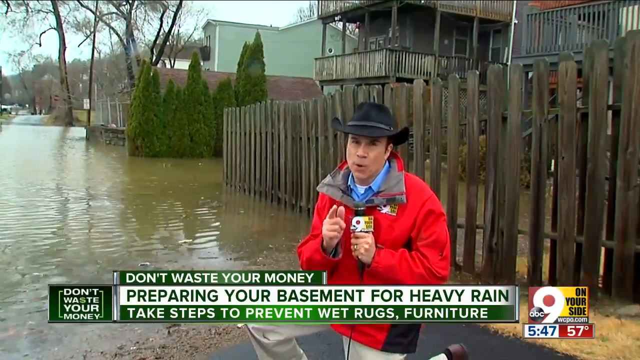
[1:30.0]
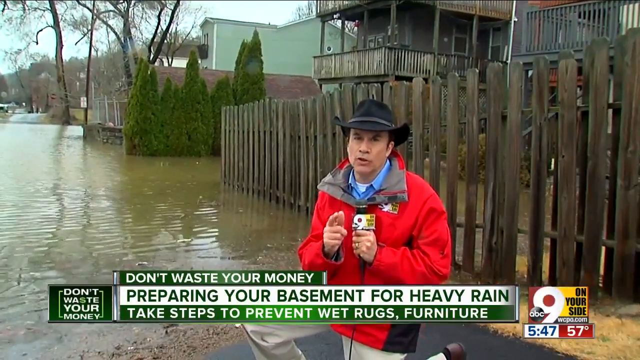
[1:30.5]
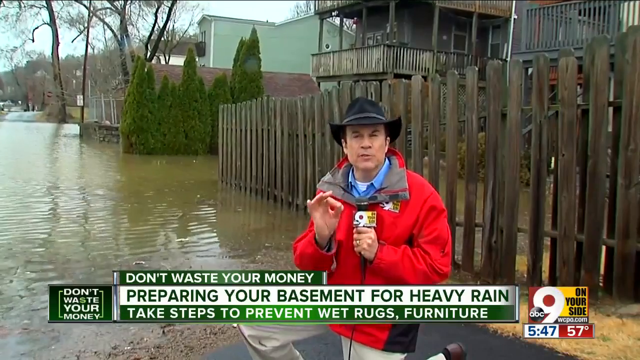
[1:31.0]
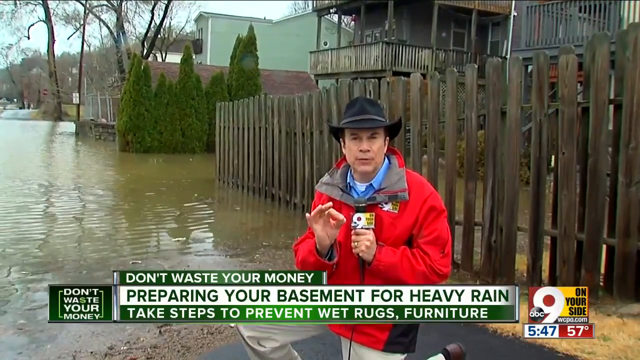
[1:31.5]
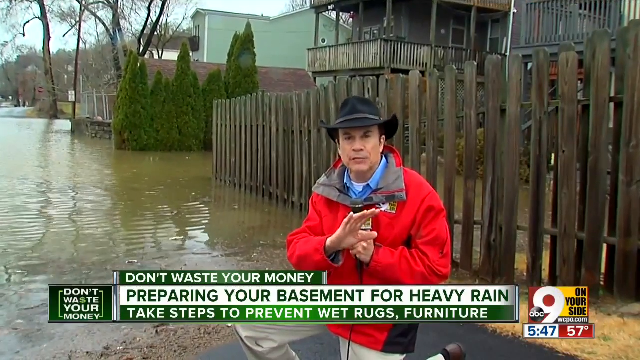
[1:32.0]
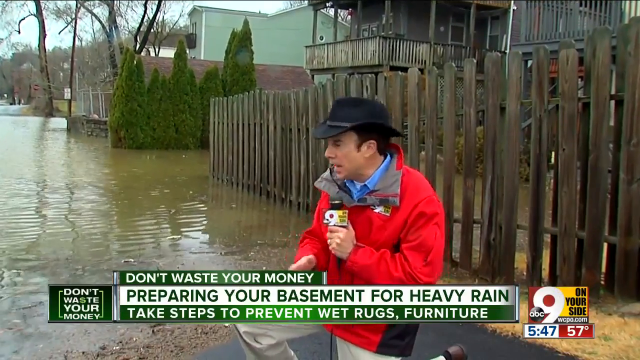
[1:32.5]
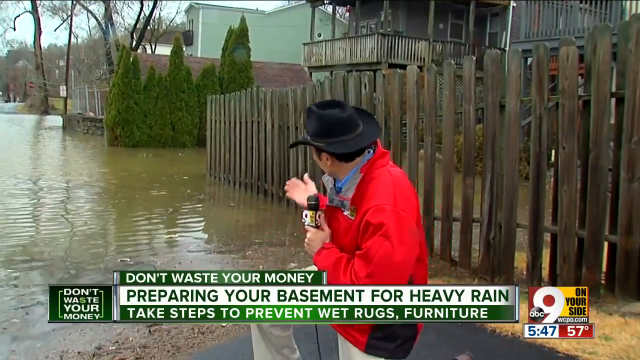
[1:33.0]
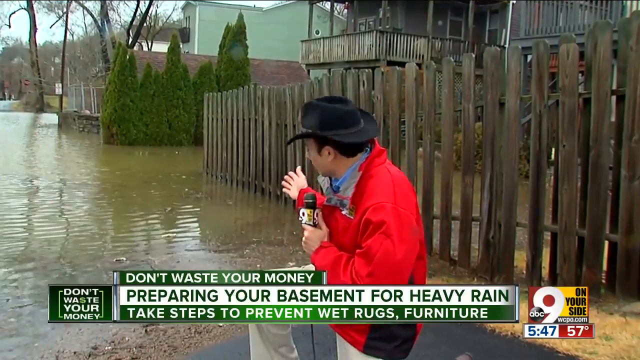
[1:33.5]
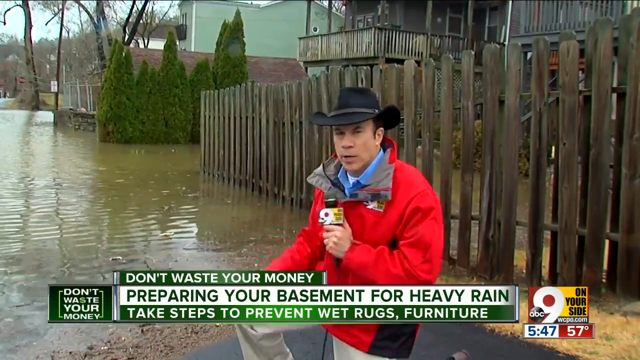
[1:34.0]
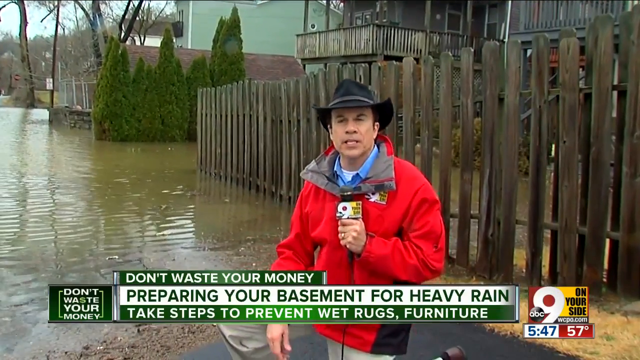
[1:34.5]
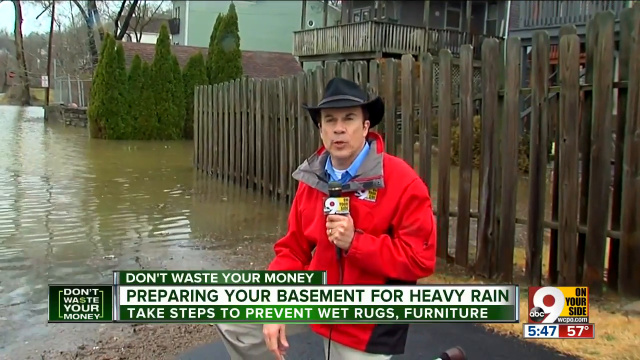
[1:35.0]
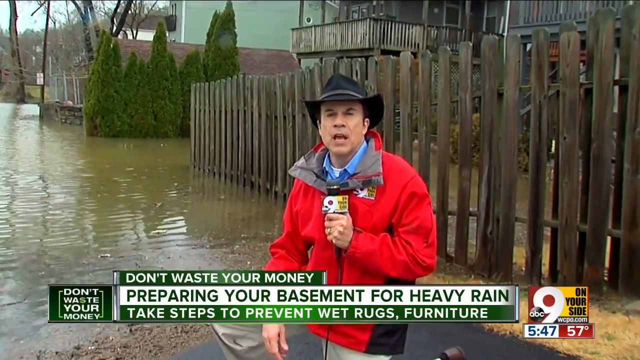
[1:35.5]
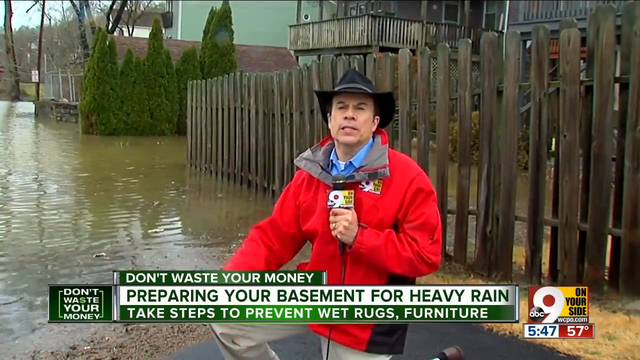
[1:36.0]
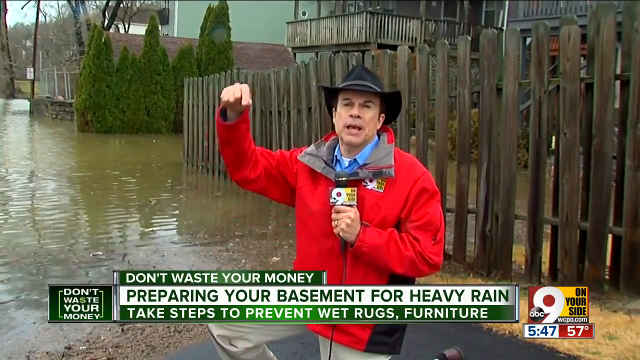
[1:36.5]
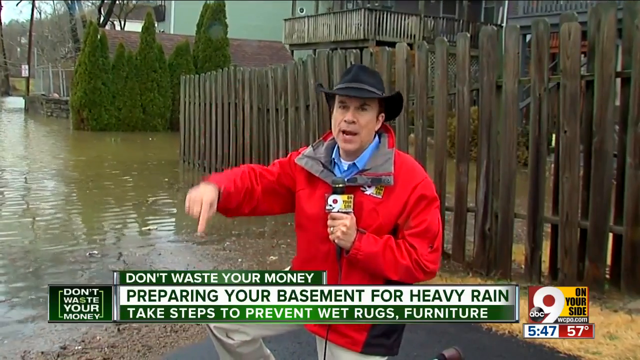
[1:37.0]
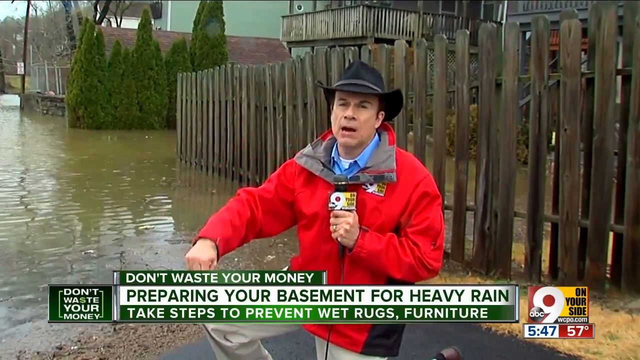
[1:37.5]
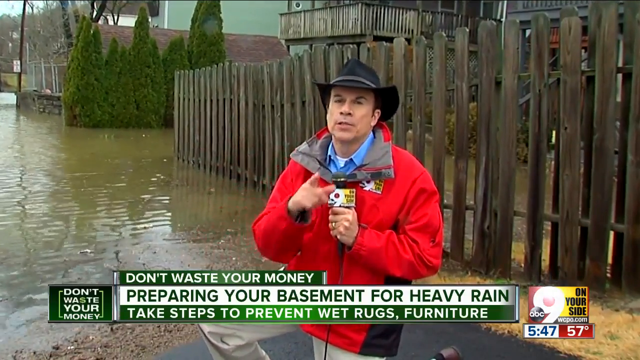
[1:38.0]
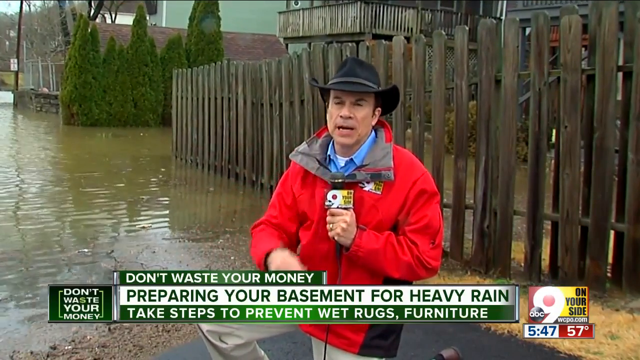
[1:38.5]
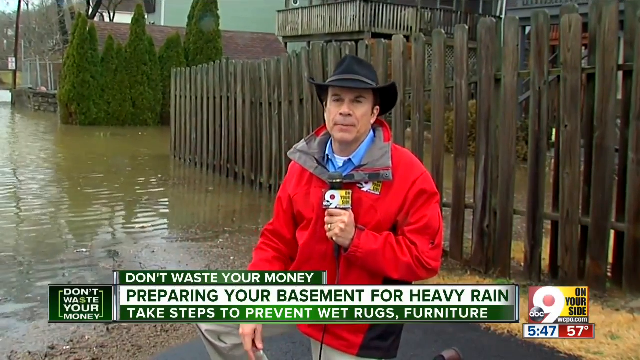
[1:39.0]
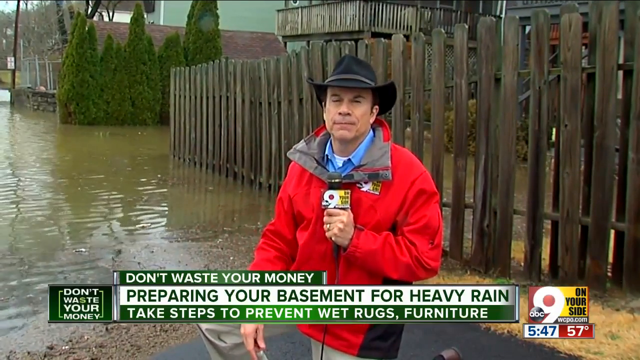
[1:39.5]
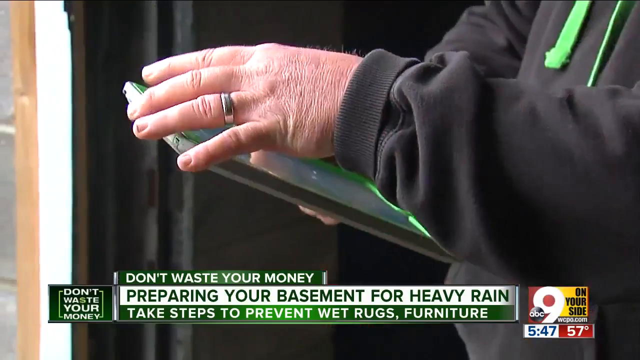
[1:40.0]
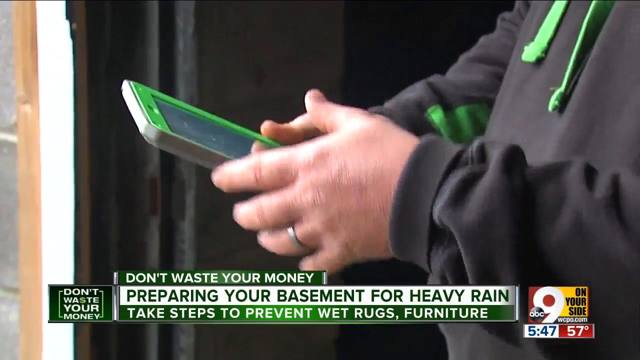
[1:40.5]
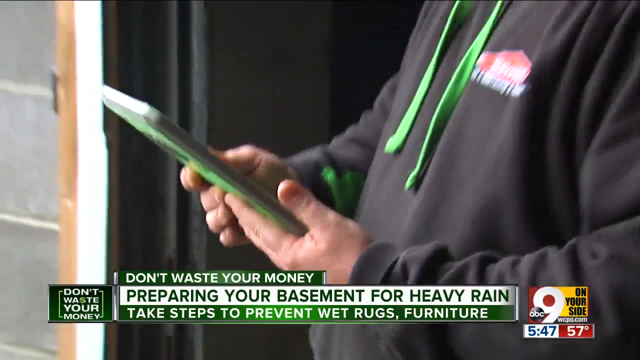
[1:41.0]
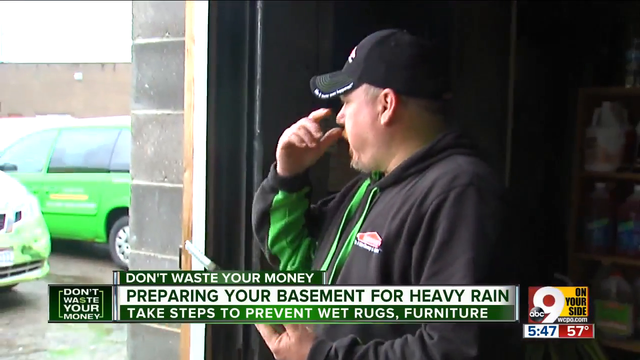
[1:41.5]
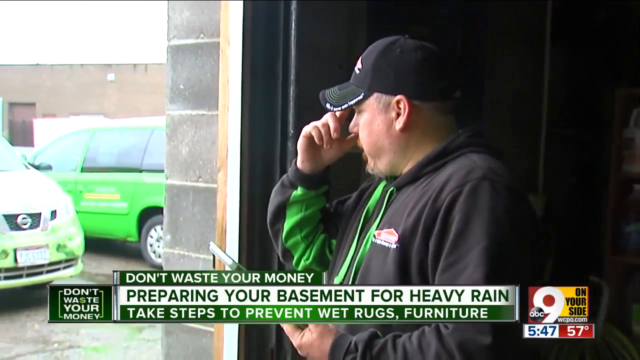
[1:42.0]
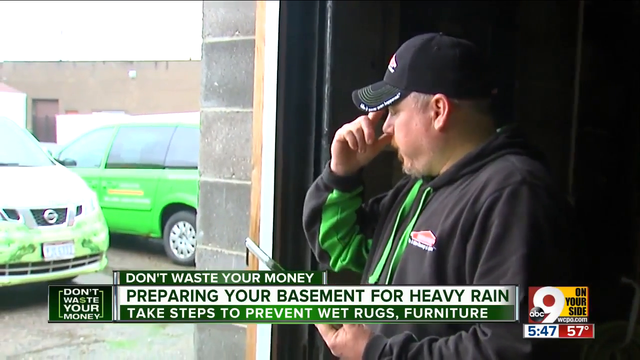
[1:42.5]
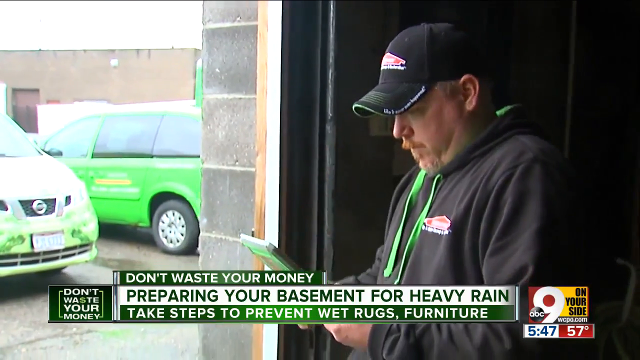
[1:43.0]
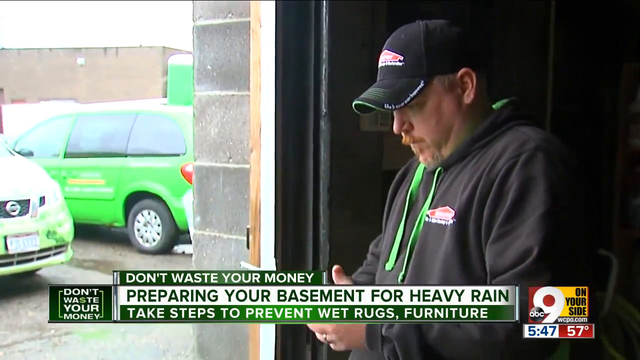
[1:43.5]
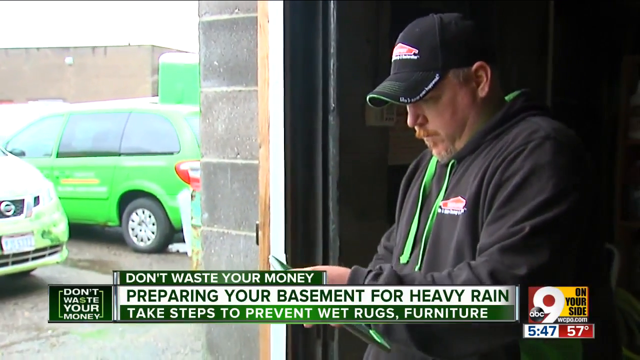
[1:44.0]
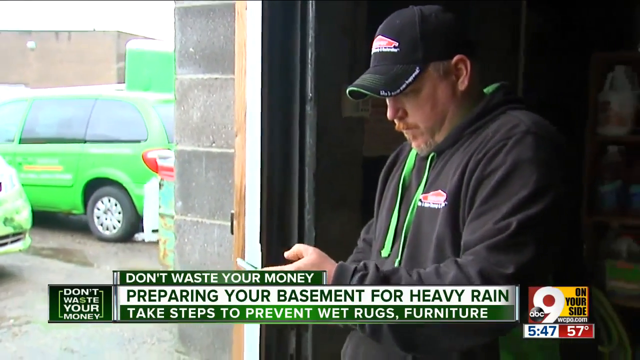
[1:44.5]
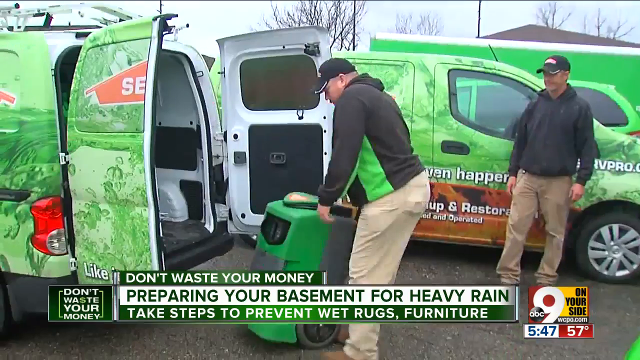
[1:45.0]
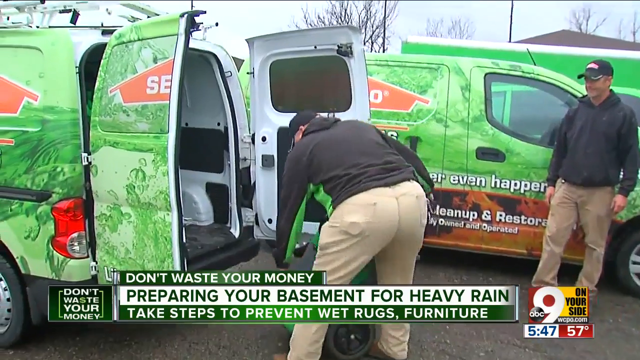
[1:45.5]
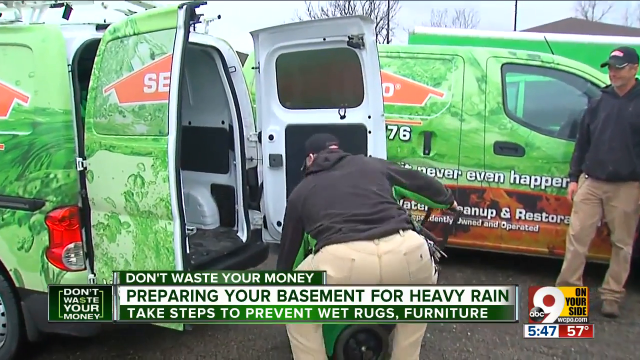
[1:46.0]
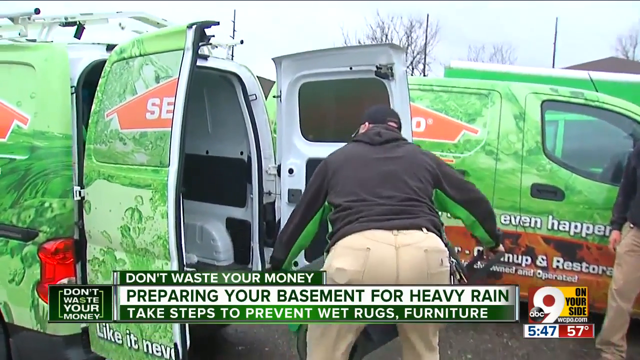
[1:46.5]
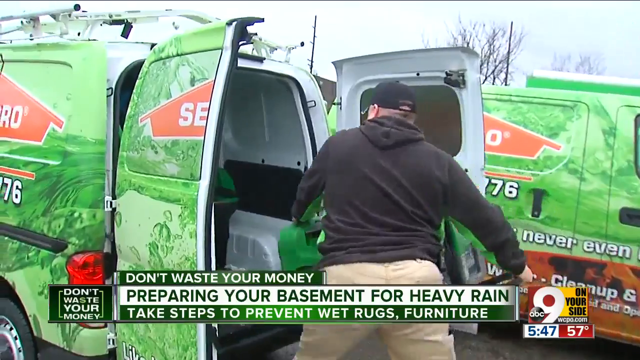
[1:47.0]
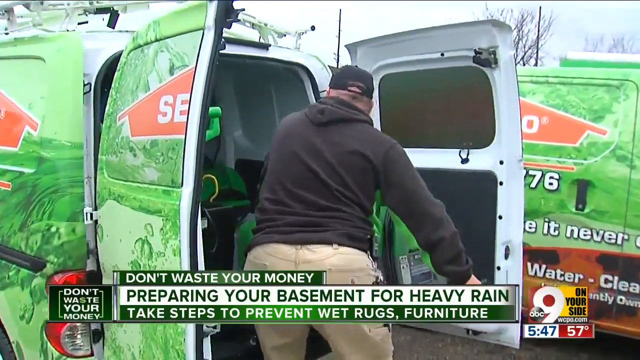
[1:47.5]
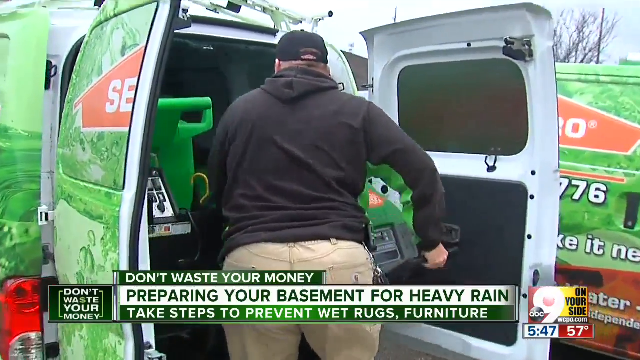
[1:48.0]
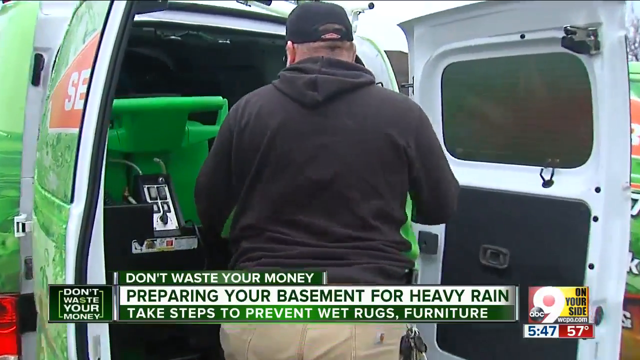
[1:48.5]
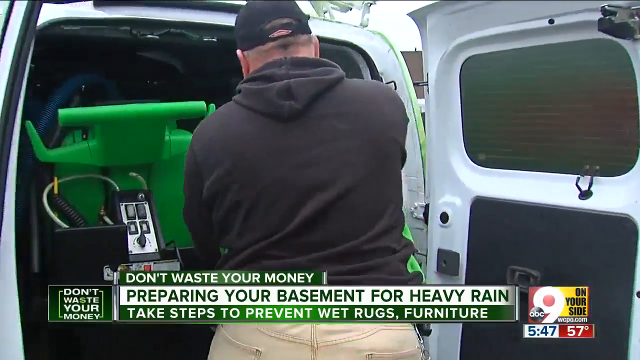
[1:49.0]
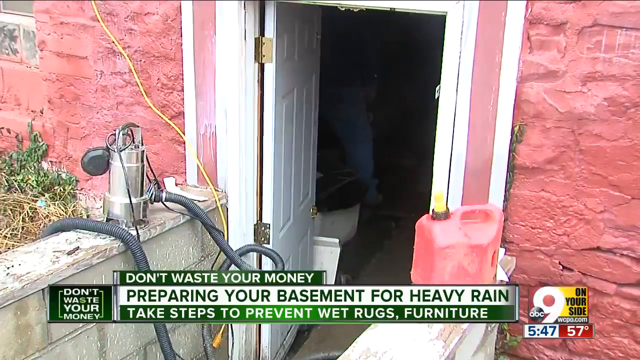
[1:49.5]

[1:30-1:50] The reporter in the black Stetson hat appears again, also wearing a red coat that looks very thick. He is a reporter for Channel 9 News. Apparently it is 57 degrees at 5:47 in the evening. He continues the Don't Waste Your Money segment on preparing your basement for heavy rainfall, and he says to take steps with wet rugs and furniture. He stands in about two feet of water; apparently a large flood took place recently and basements have been flooded out. A number of different plumbers are shown going around pumping water out of basements and repairing leaks in basement walls. They have a lot of heavy equipment, including many pumps and hoses.